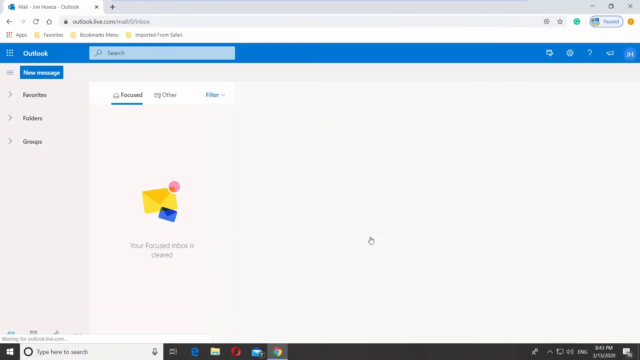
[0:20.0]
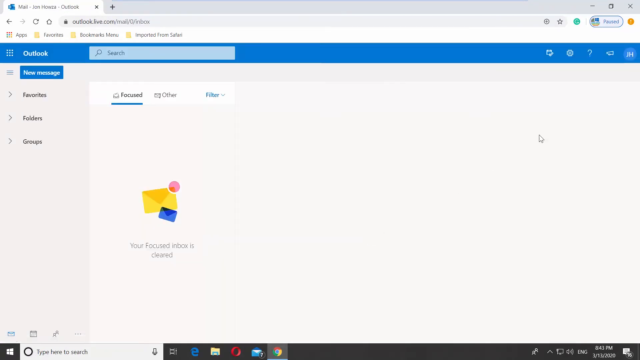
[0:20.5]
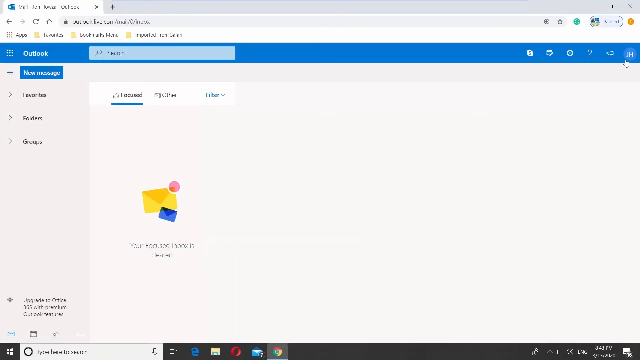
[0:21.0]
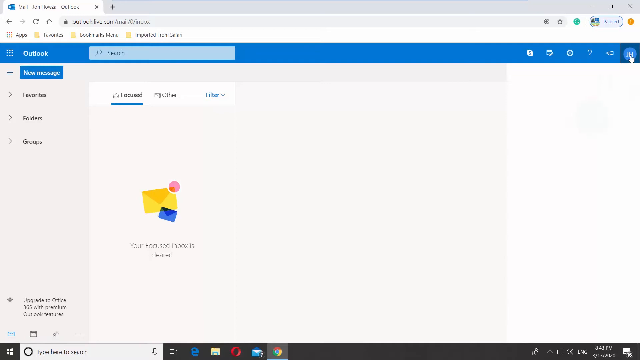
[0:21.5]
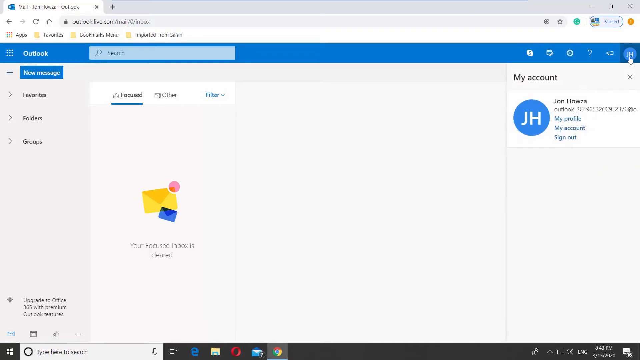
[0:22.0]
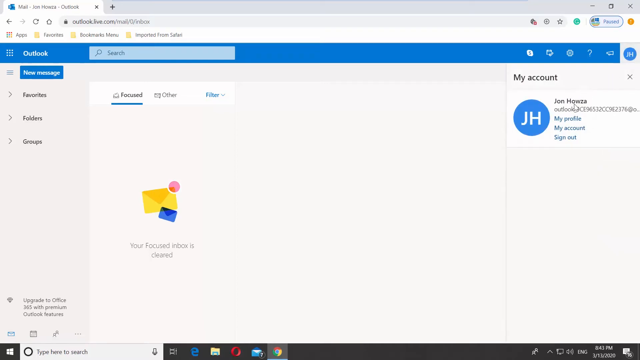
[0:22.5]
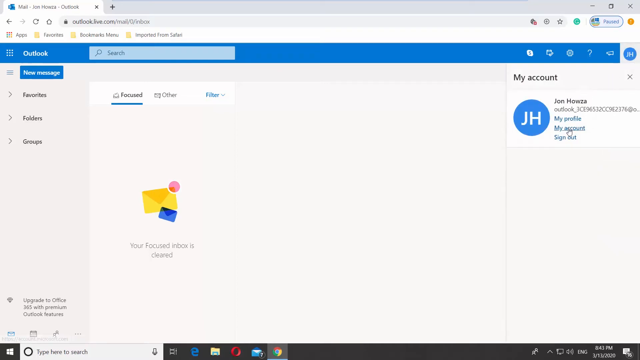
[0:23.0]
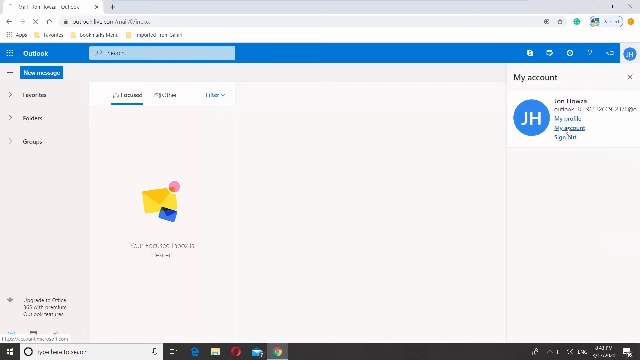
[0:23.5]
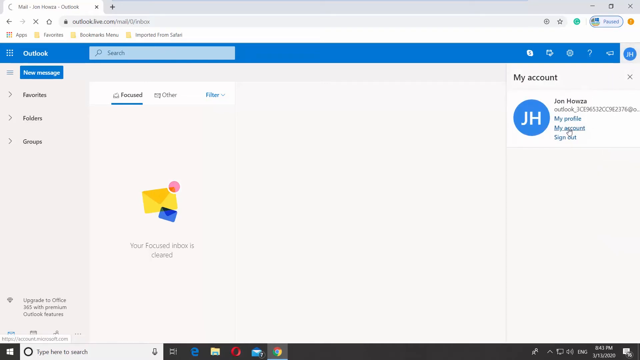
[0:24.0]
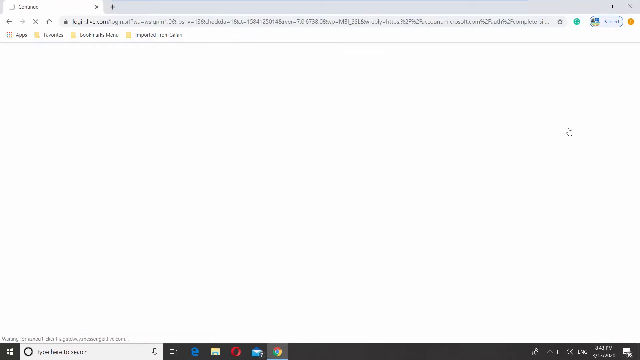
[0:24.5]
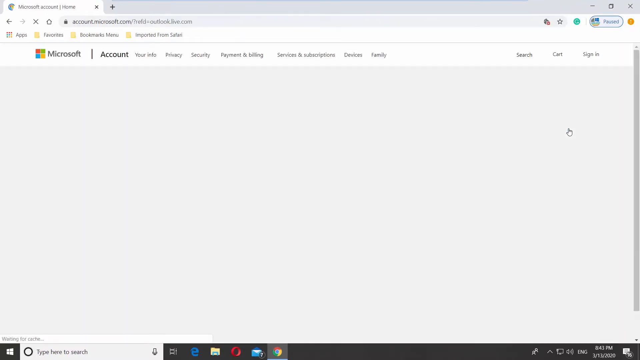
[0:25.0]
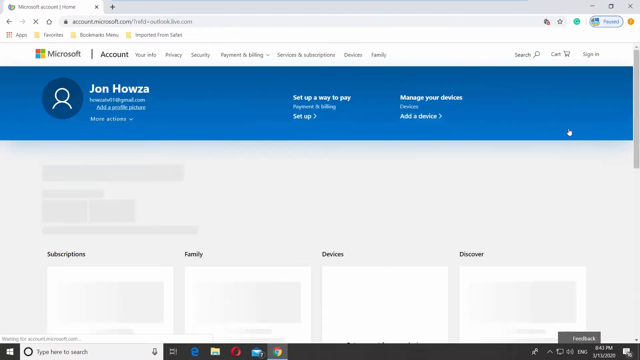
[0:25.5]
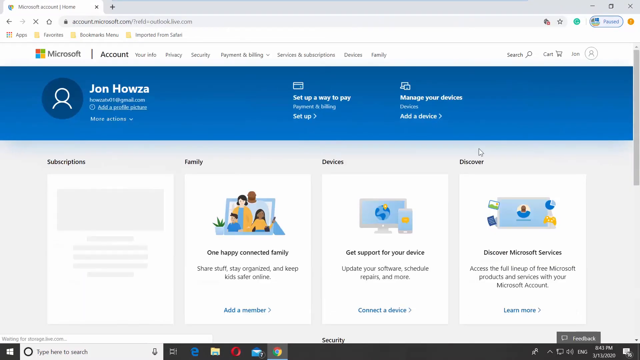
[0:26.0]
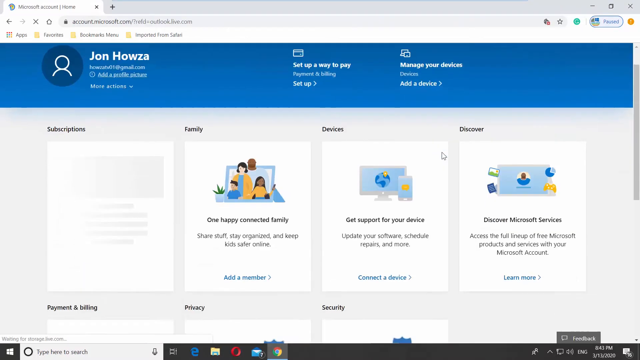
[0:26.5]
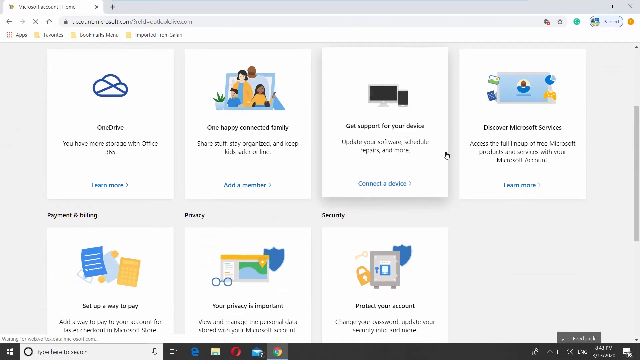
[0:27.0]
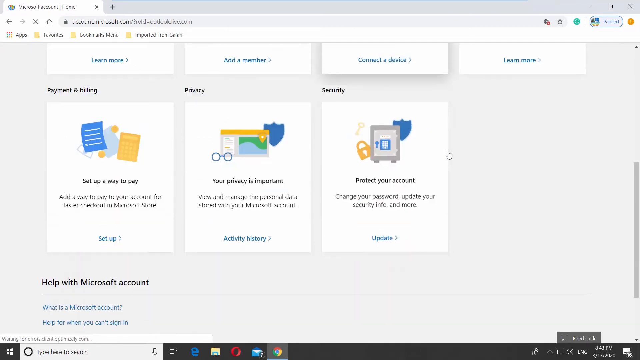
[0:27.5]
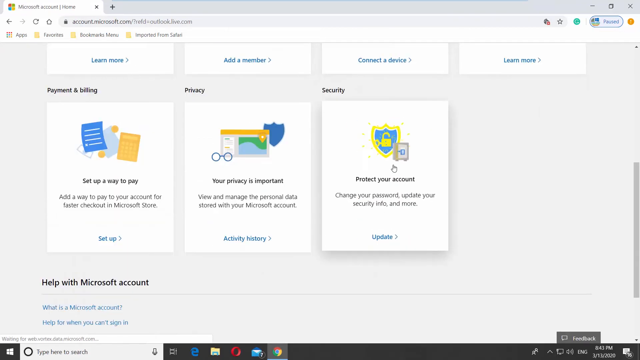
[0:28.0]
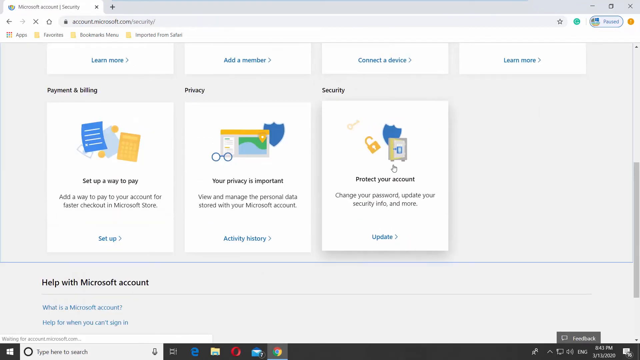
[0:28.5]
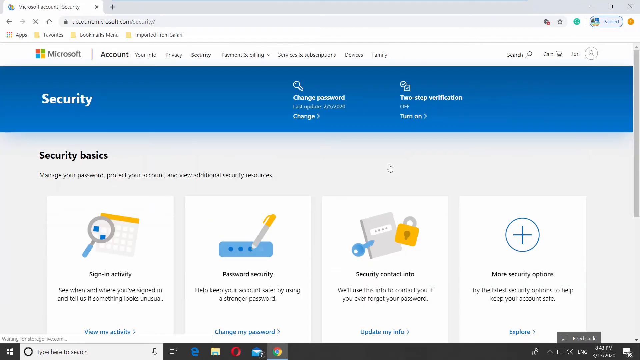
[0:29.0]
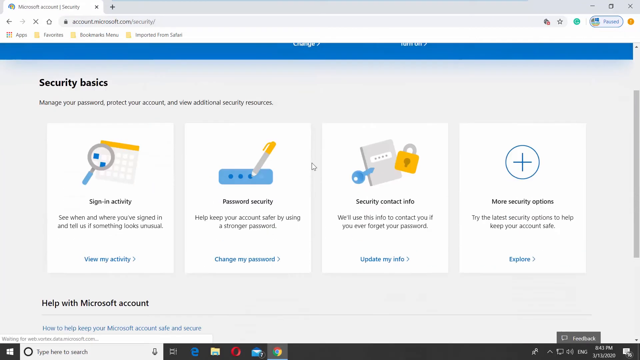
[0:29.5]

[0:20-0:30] Inside the account, the person clicks their initials, "JH", at the top right of the screen. A small panel appears reading "my account", with the name "John Housa" underneath and, below that in blue, "my profile", "my account" and "sign out". They click "my account", which opens the My Account page showing various options, and they go to the last one on the bottom left, "protect your account". Clicking it opens a new screen with further options such as "sign-in activity", "password security", "security contact info" and "more security options", and they click "password security".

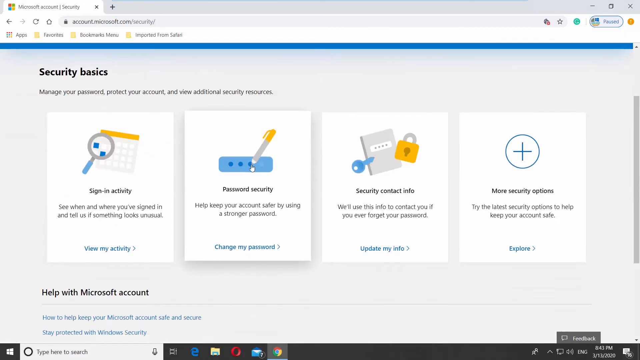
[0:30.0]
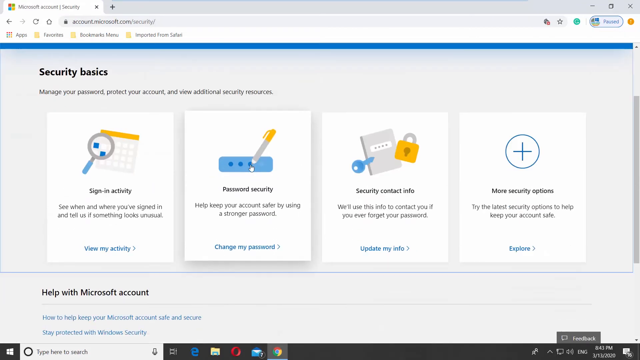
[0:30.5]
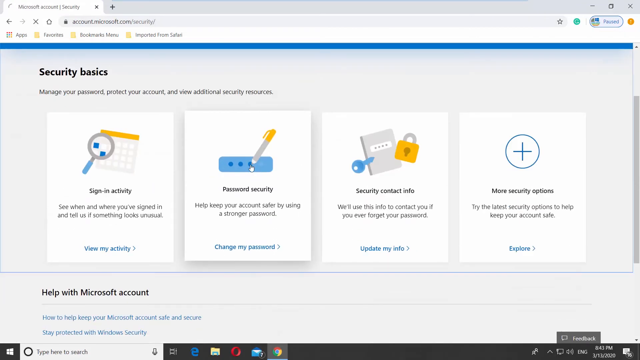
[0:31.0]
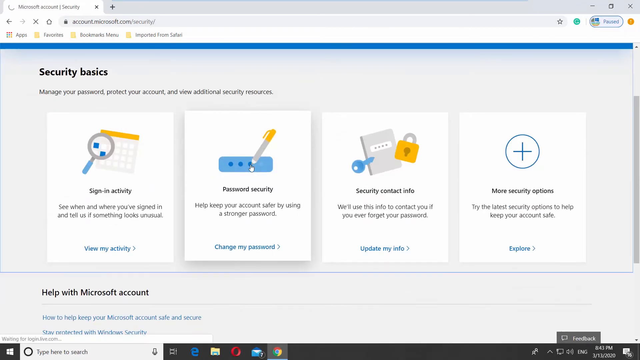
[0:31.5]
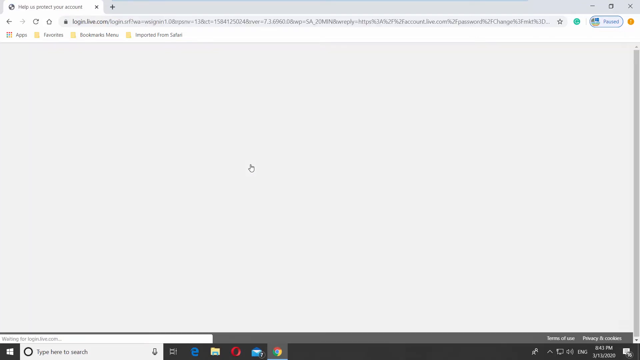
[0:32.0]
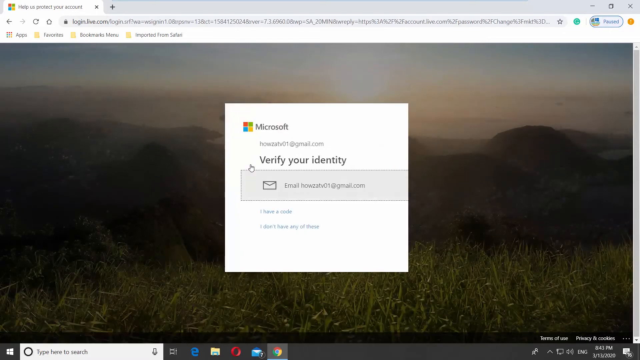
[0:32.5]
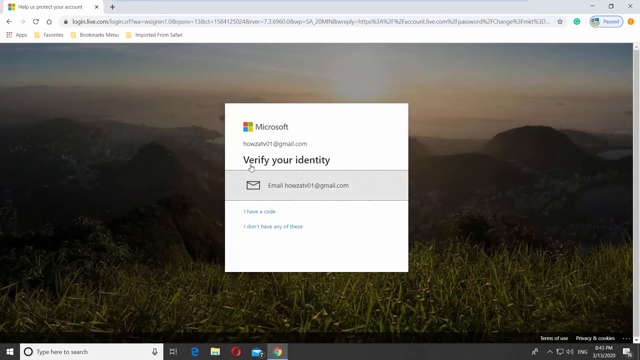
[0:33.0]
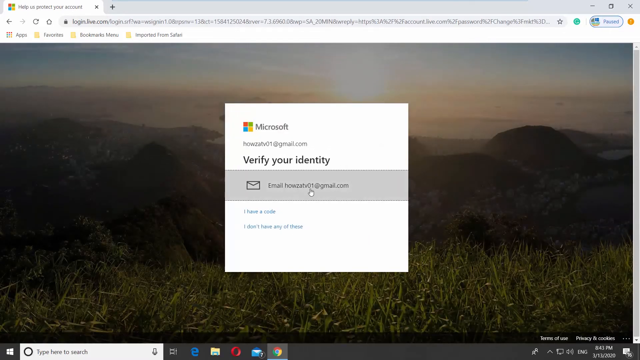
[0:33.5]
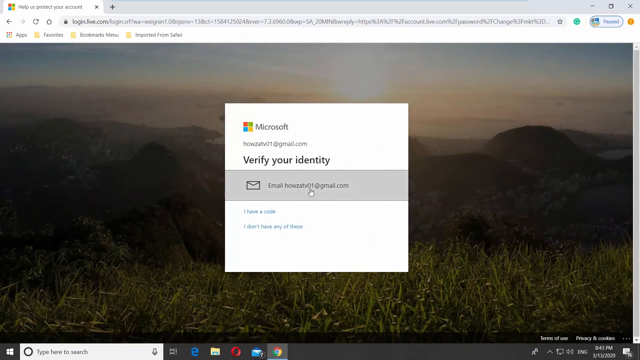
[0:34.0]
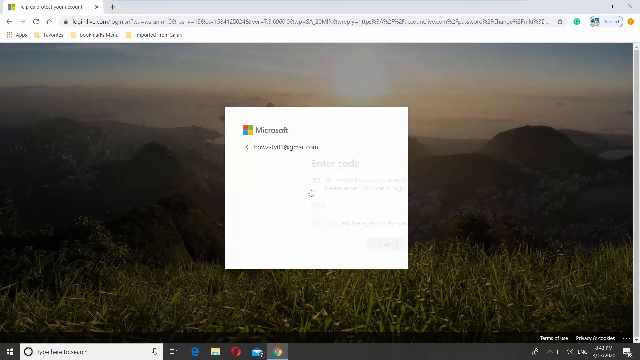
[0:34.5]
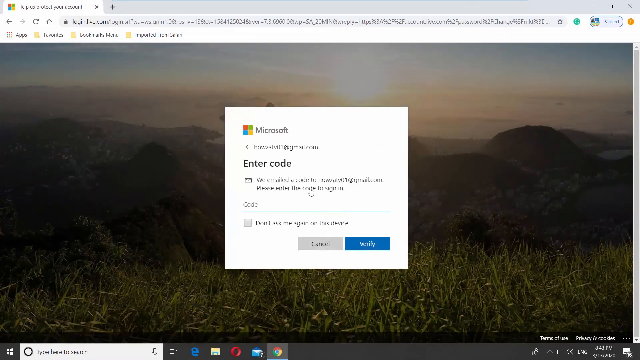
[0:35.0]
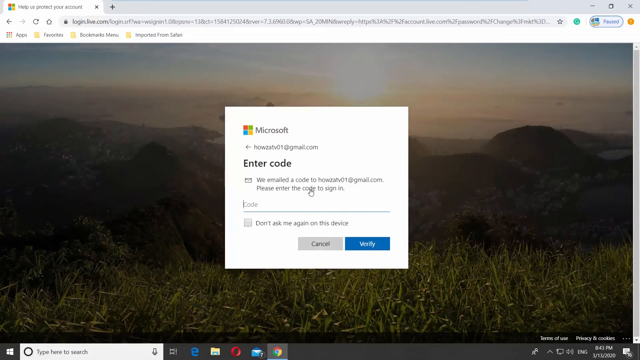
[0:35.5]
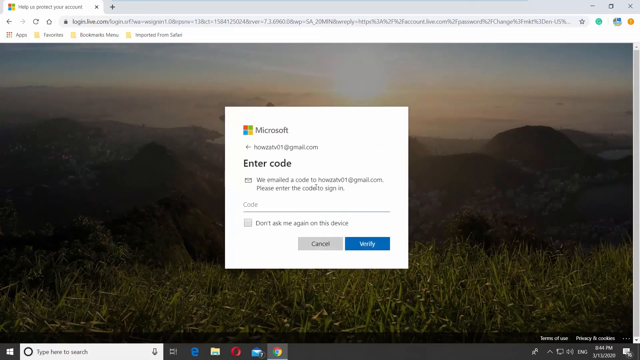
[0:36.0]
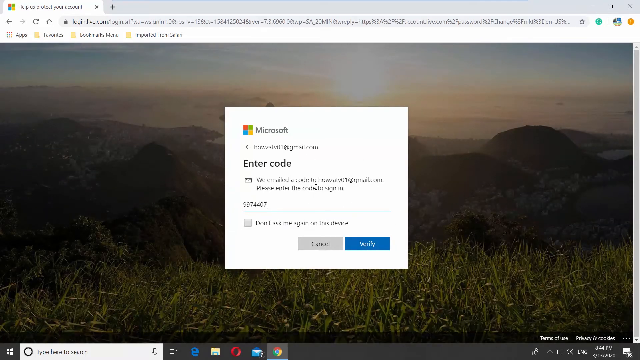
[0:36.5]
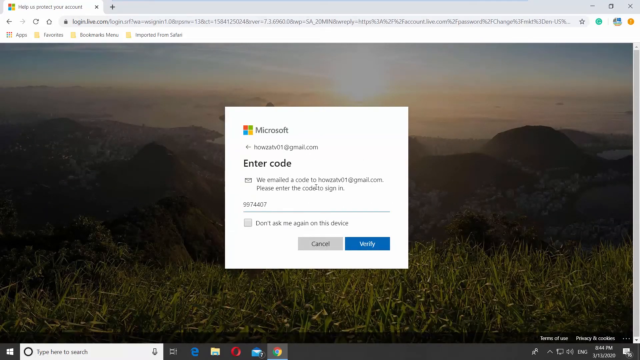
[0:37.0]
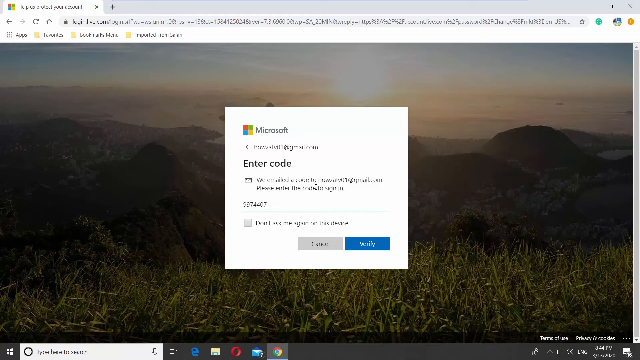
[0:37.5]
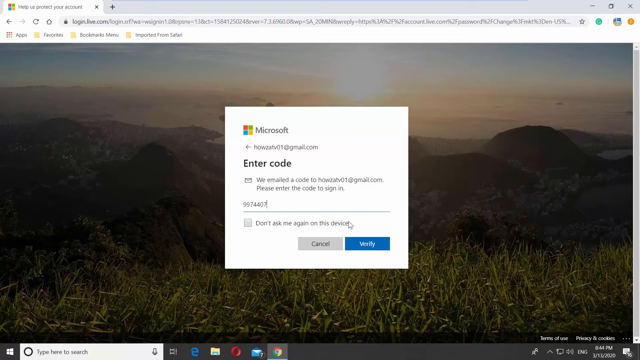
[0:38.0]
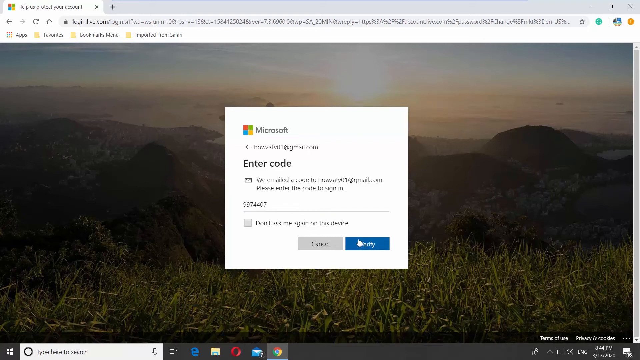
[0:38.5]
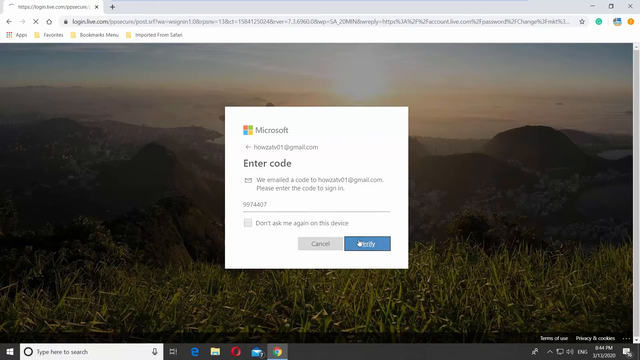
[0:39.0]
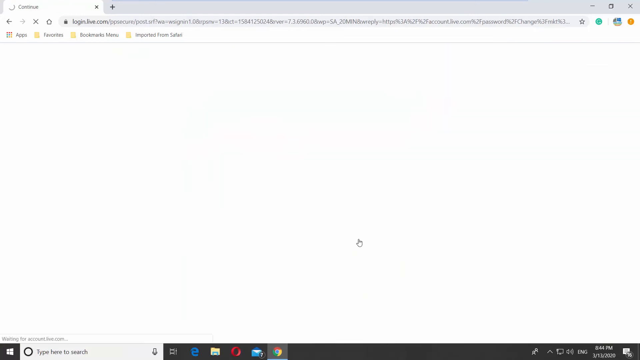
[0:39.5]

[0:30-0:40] After password security is selected, a Microsoft "Verify Your Identity" page appears. The person clicks their email to verify their identity, enters the code sent to their email address into the bar, and clicks "Verify". The page then redirects to a "Change Your Password" page. At the top left are the Microsoft name and logo, with "Account" highlighted beside it. Below is "Change Your Password", followed by fields for the current password, the new password and re-entering the new password. Nothing has been entered yet.